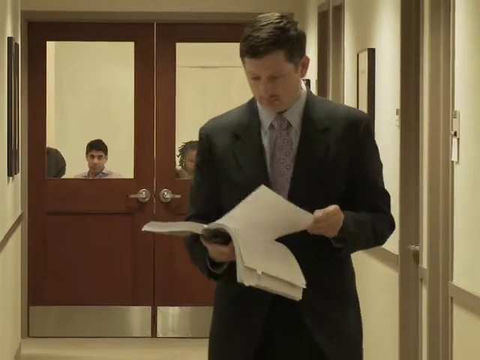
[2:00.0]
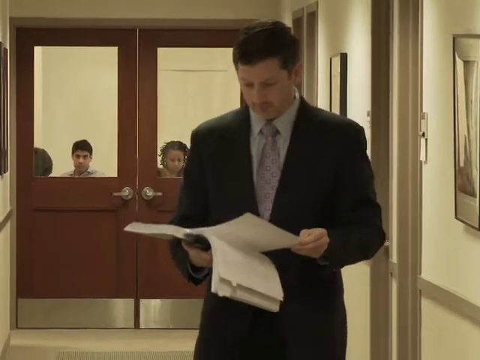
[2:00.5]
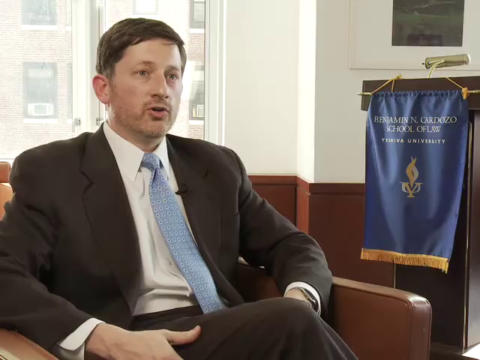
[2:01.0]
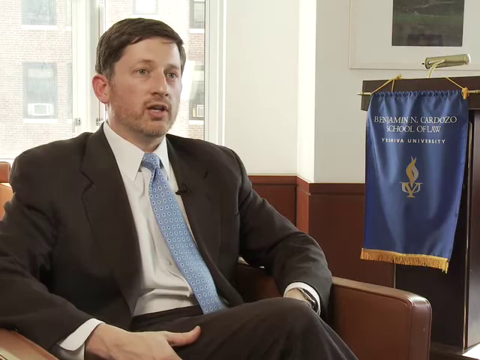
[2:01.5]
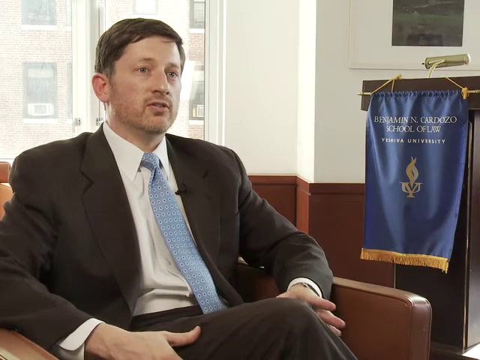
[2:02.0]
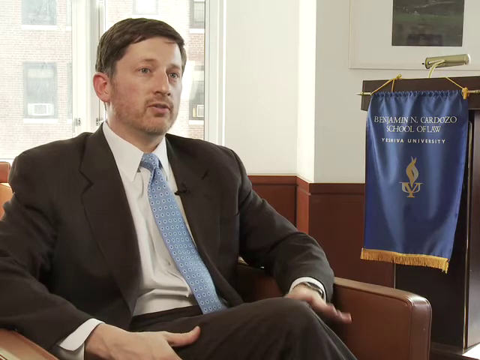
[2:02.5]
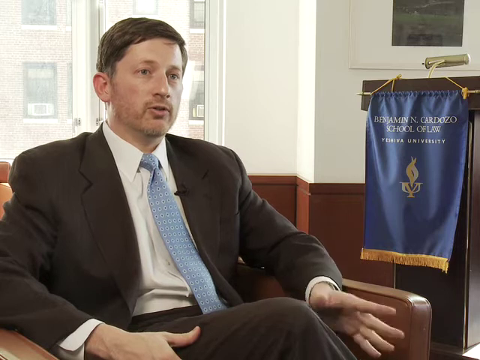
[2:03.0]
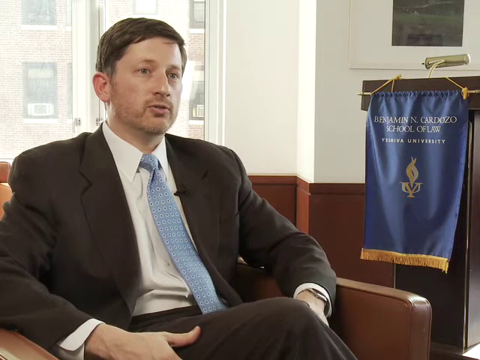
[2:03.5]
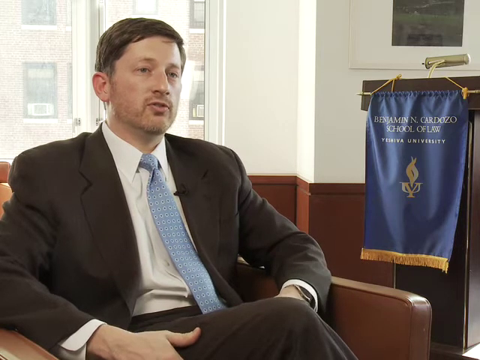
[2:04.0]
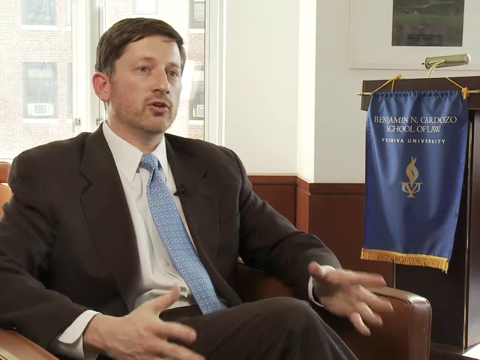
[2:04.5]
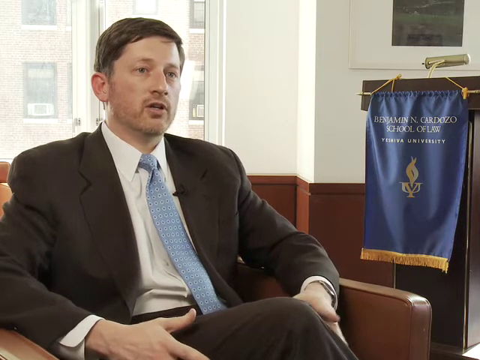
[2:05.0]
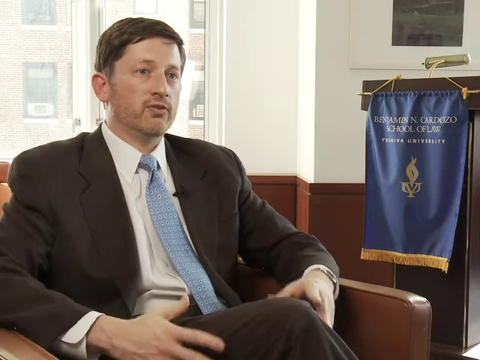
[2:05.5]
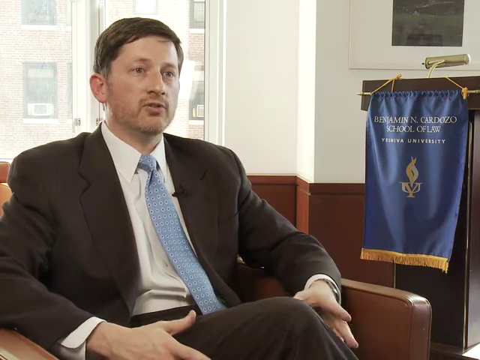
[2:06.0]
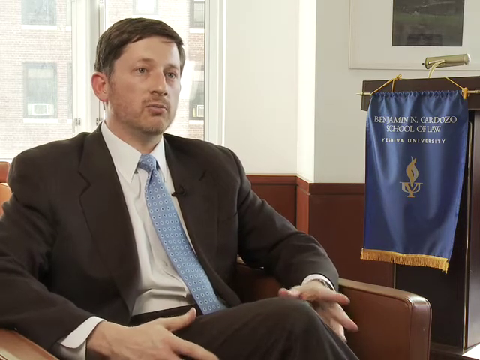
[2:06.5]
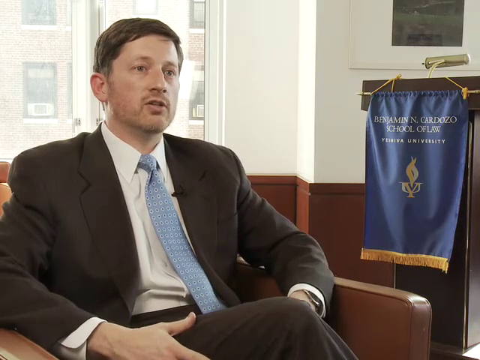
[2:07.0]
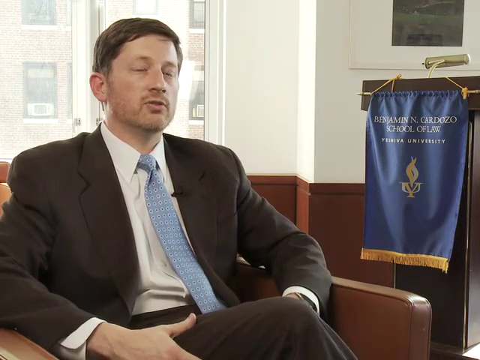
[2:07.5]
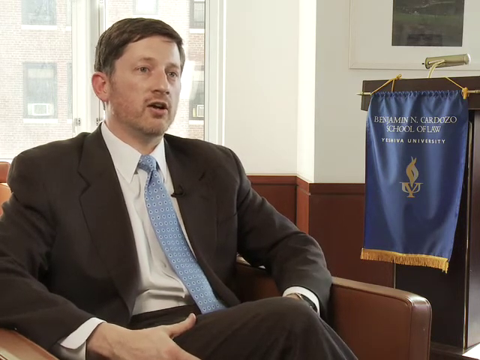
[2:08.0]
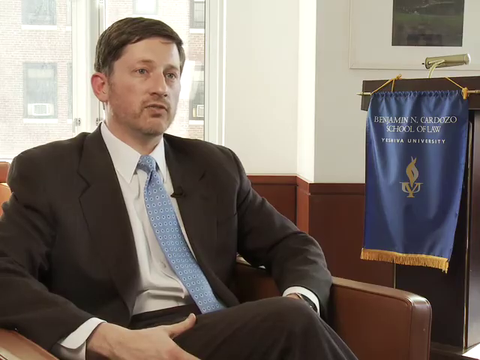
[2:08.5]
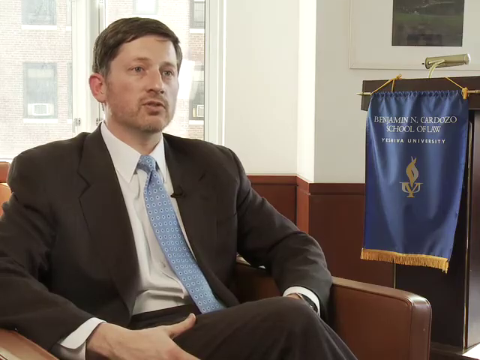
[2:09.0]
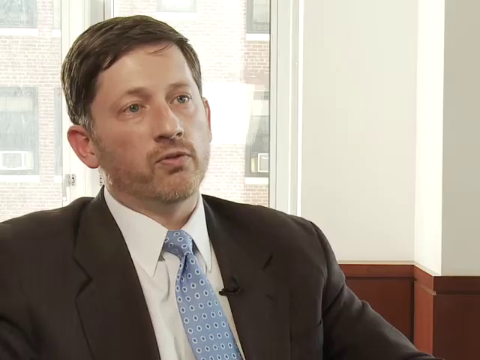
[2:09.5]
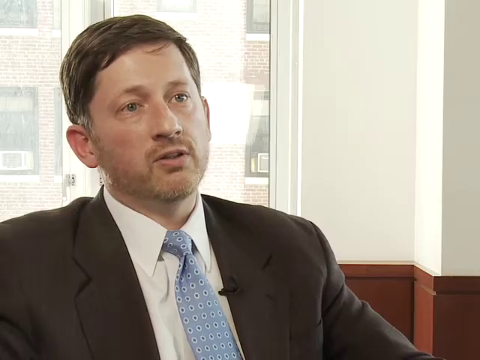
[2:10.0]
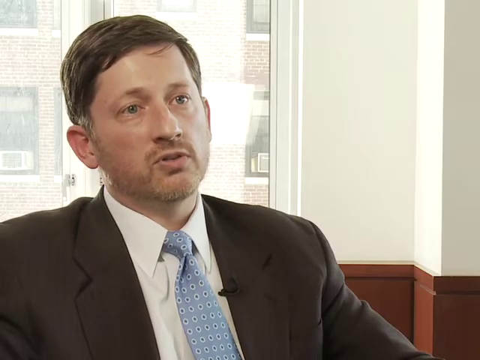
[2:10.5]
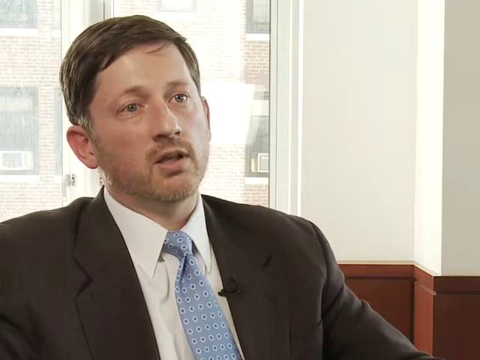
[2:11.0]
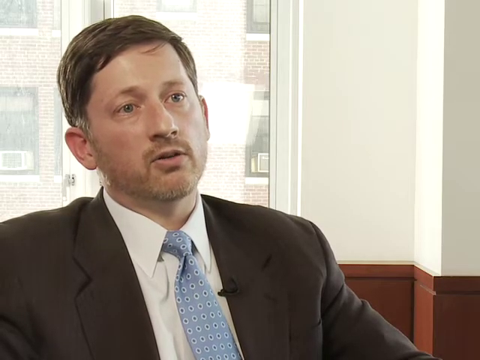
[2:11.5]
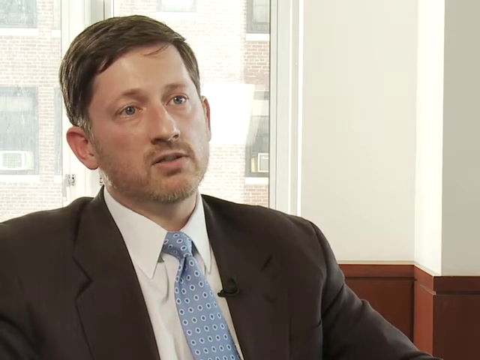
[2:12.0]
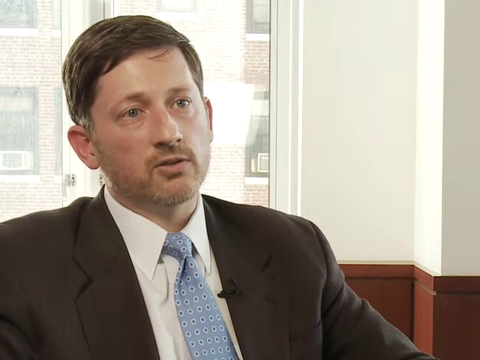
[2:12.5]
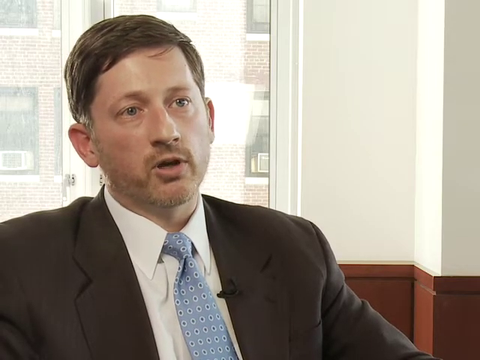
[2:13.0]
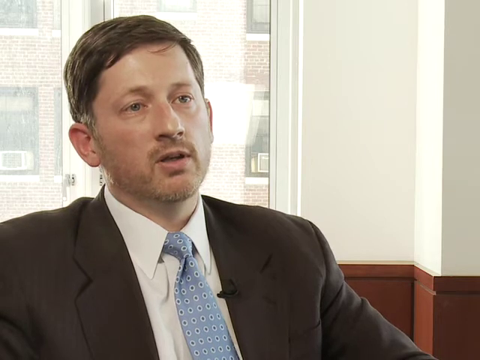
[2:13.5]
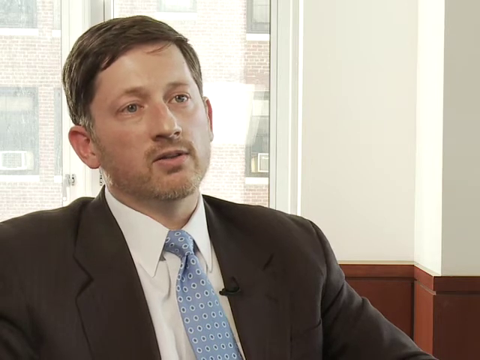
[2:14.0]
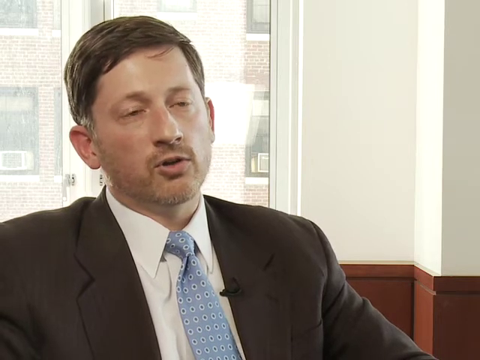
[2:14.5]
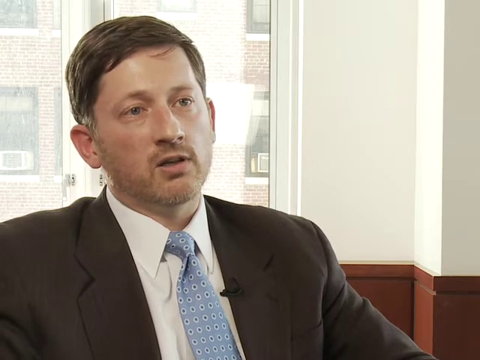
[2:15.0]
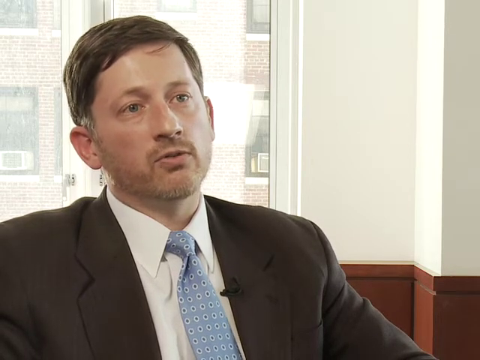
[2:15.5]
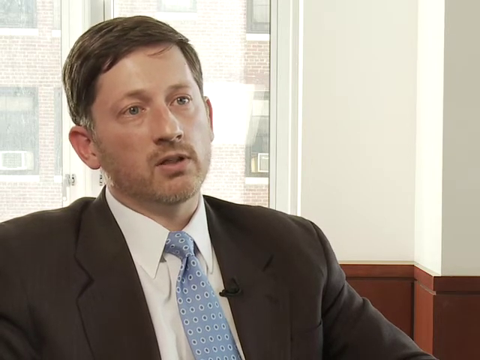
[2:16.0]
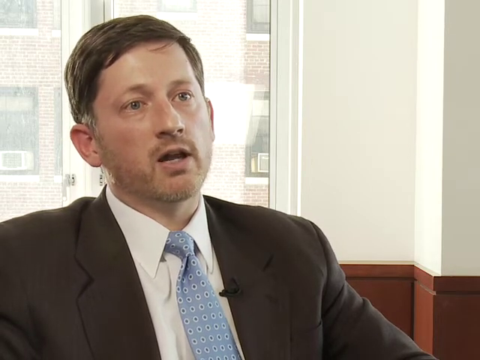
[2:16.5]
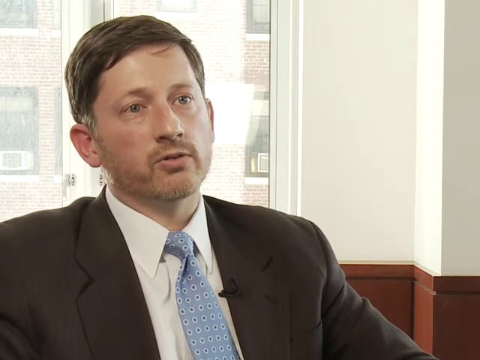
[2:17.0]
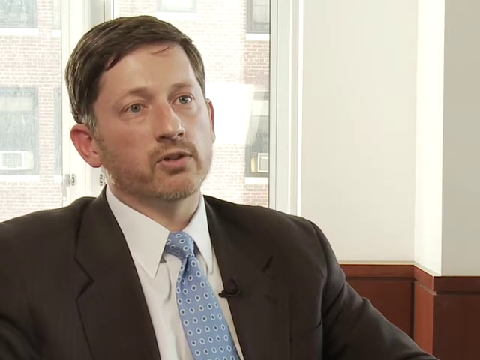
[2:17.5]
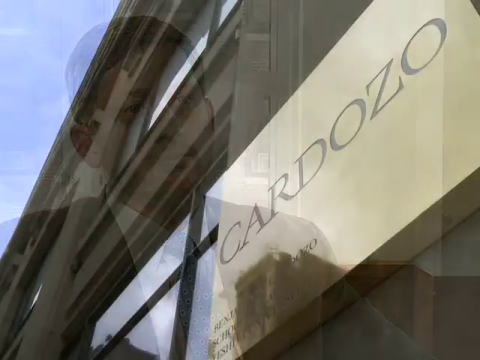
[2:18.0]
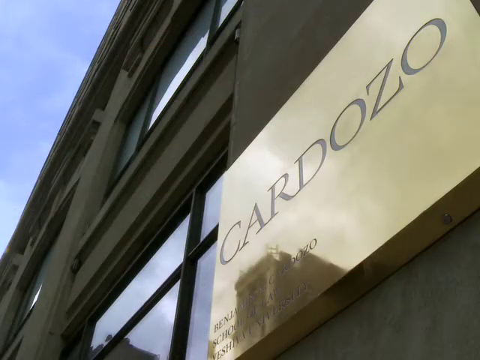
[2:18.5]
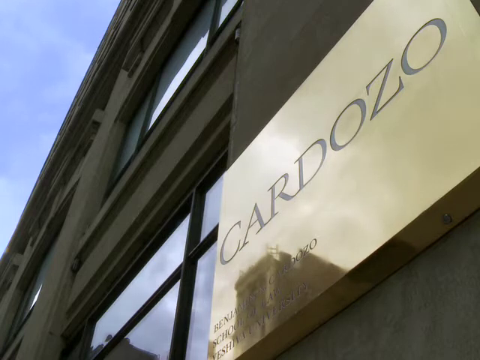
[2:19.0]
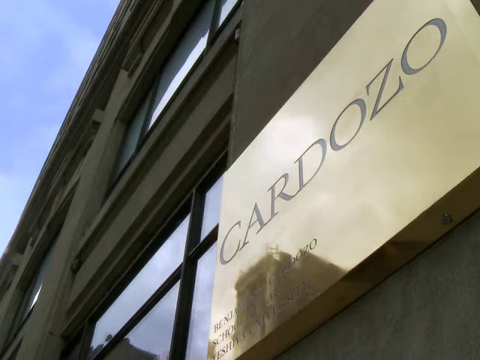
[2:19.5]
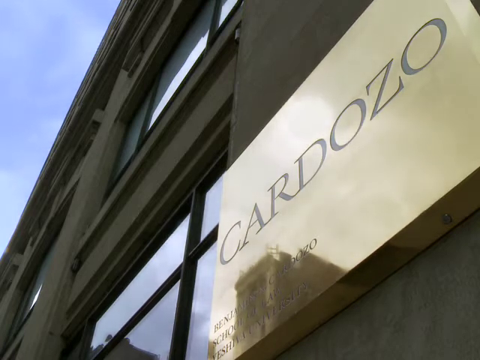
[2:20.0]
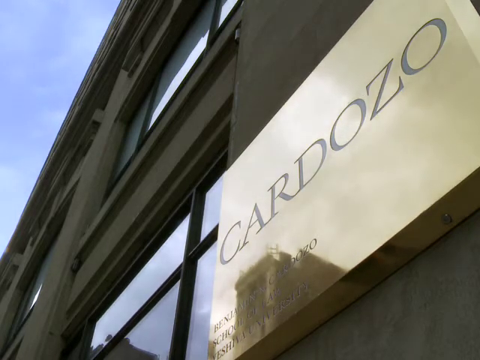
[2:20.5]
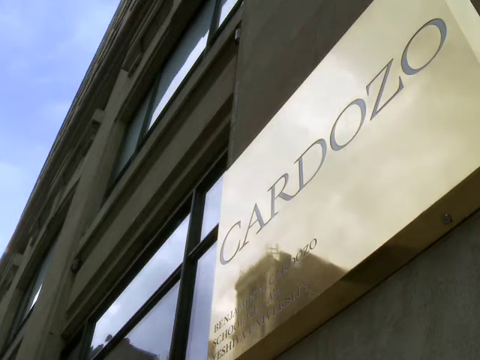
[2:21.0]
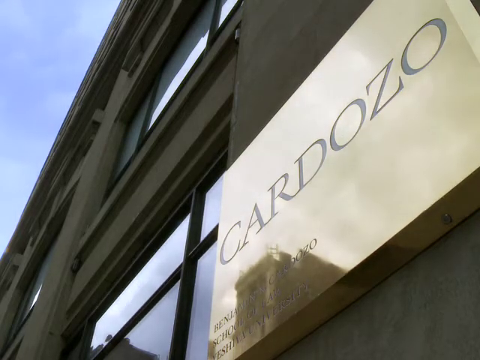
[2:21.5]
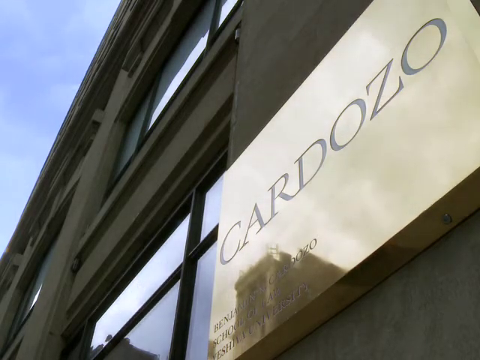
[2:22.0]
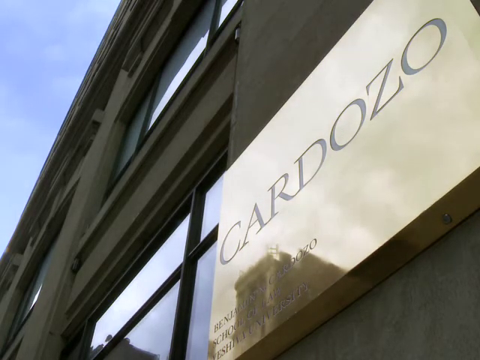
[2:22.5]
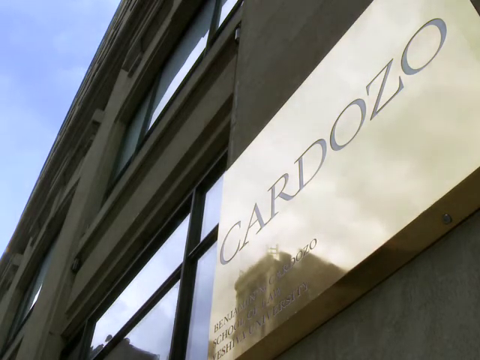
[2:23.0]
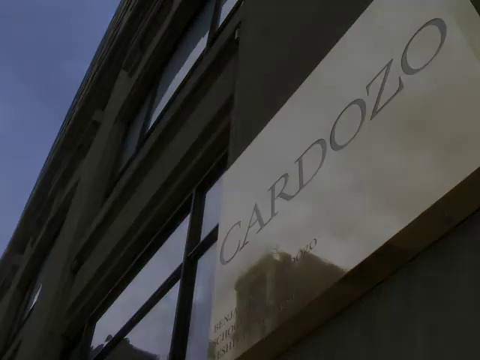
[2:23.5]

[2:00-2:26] A man just right of center faces the viewer and is seen from the waist up. He wears a black suit, a light purple tie and a light blue shirt, is probably around 40-some, and has medium-length brown hair. He walks toward the viewer holding an open book, holding a page in his left hand and the book in his right. Behind him are brown double doors with two windows, in which a couple of children's faces are visible. The video then goes to a man sitting in a chair, facing about five o'clock, wearing a black suit with a white undershirt and a light blue tie; he is probably in his 40s. He appears to be talking as if in an interview, gesturing with his left hand and making circles with his fingers splayed out, adding his right hand from time to time. The view then zooms in closer so only his face and shoulders are visible and his hands can no longer be seen, and he continues to talk. Finally, the view zooms in on the side of a building with a big gold sign bearing black capital letters that say "CARDOZO."